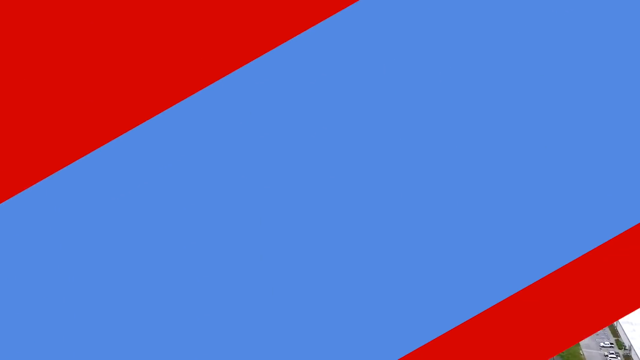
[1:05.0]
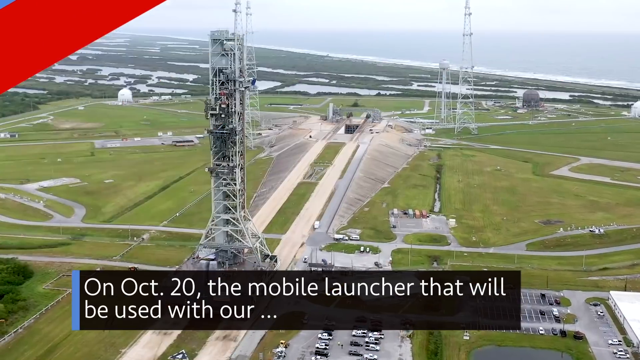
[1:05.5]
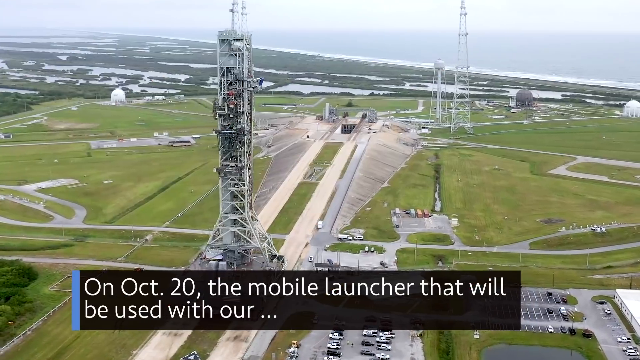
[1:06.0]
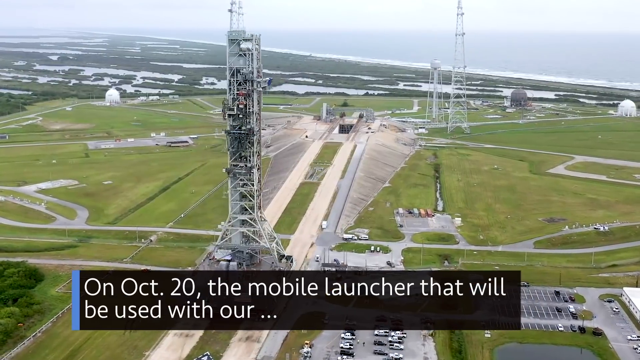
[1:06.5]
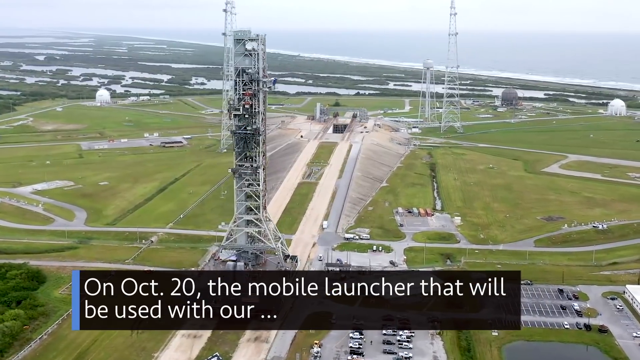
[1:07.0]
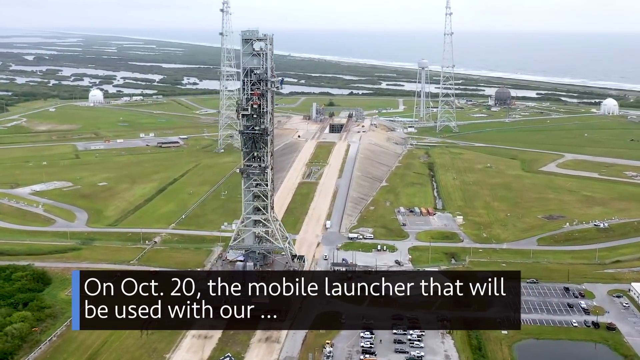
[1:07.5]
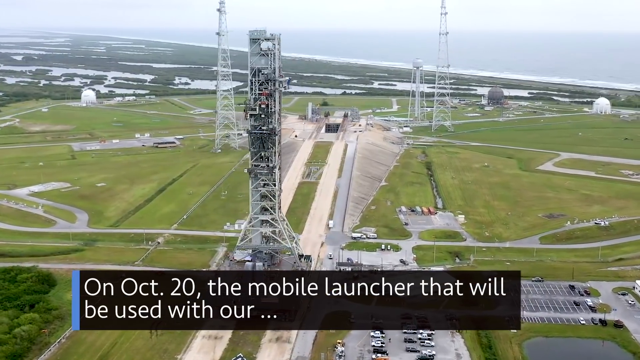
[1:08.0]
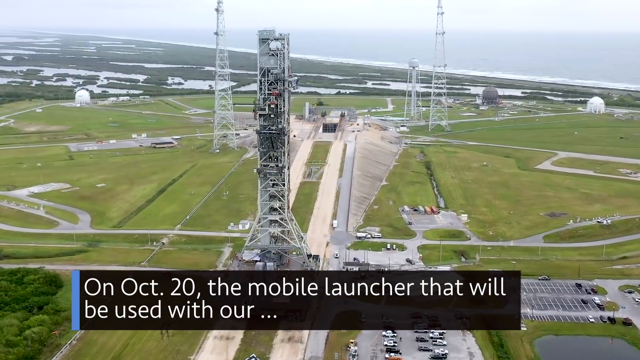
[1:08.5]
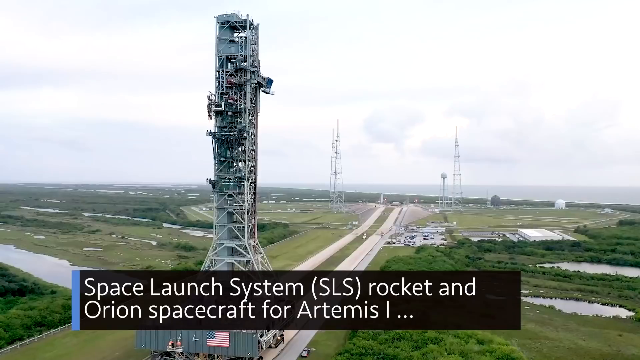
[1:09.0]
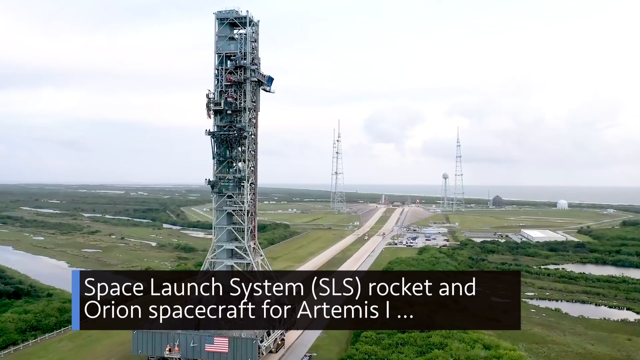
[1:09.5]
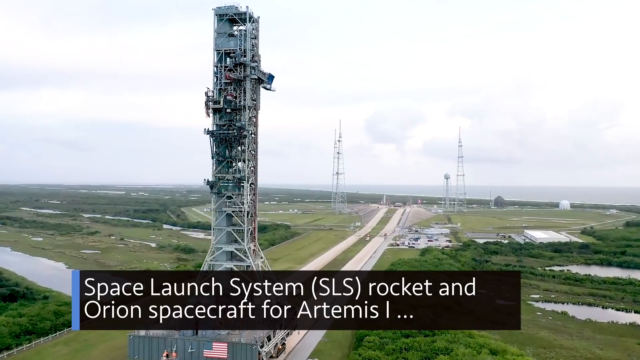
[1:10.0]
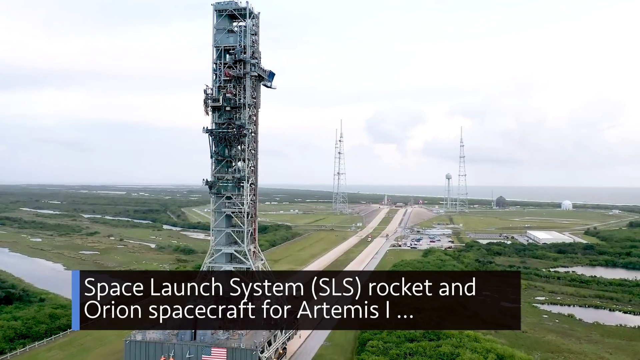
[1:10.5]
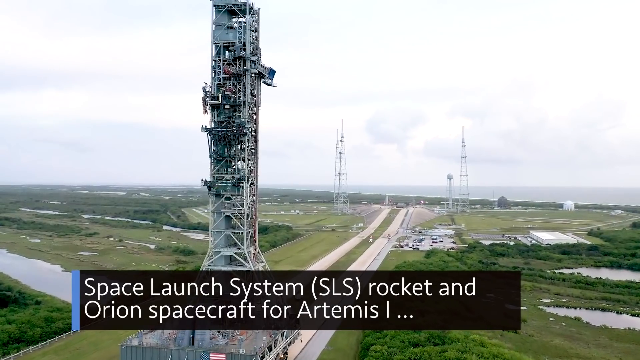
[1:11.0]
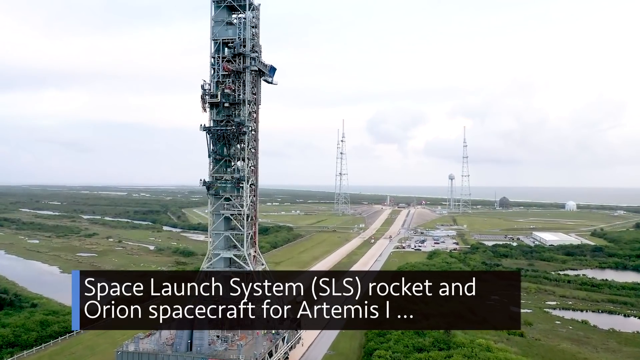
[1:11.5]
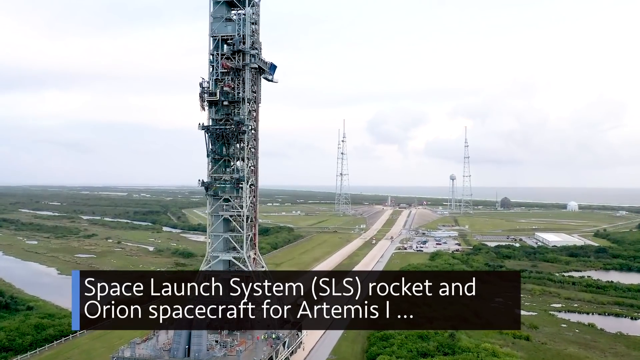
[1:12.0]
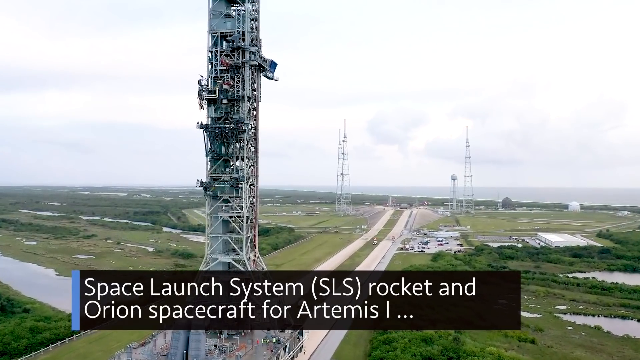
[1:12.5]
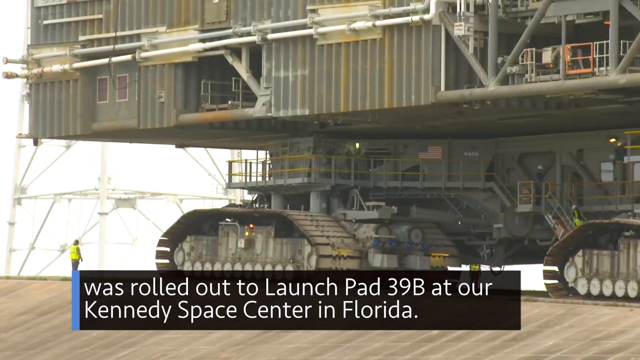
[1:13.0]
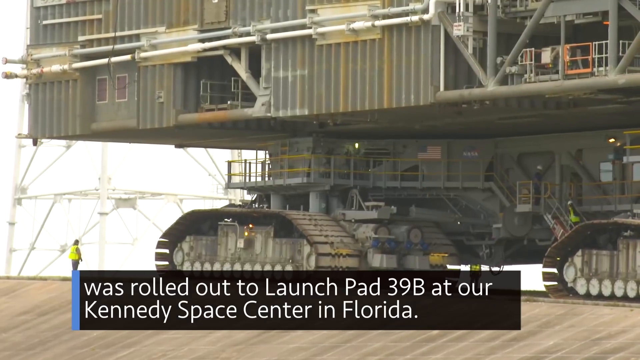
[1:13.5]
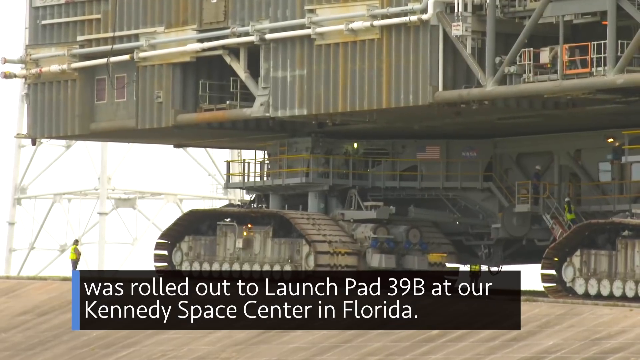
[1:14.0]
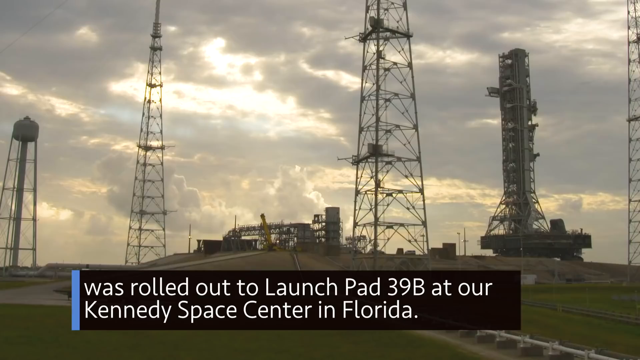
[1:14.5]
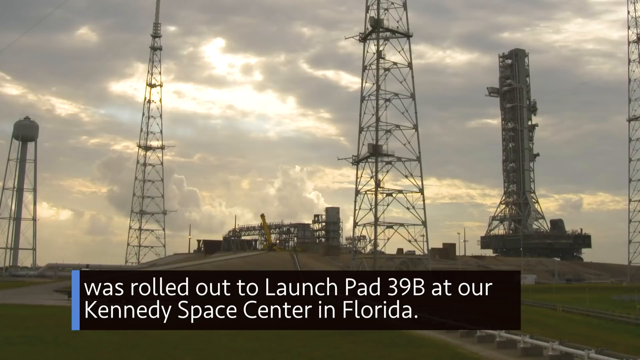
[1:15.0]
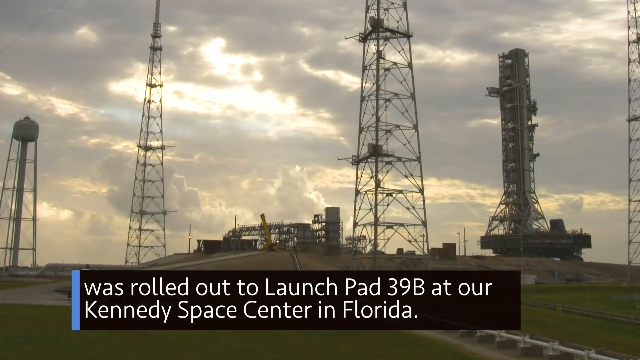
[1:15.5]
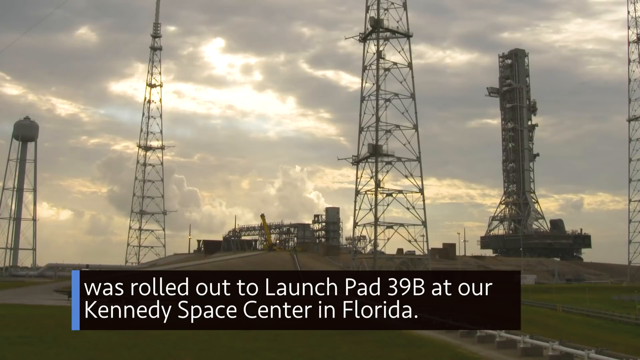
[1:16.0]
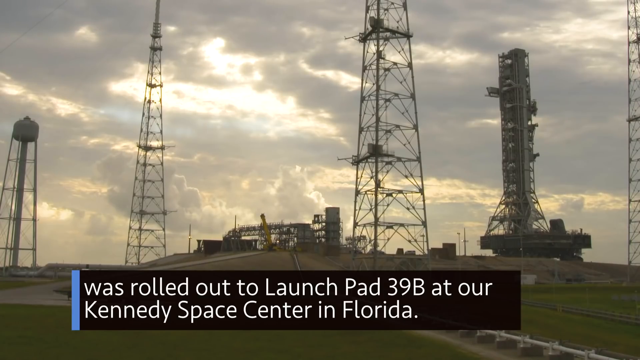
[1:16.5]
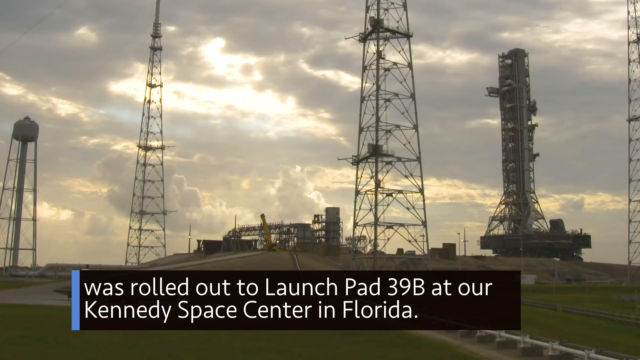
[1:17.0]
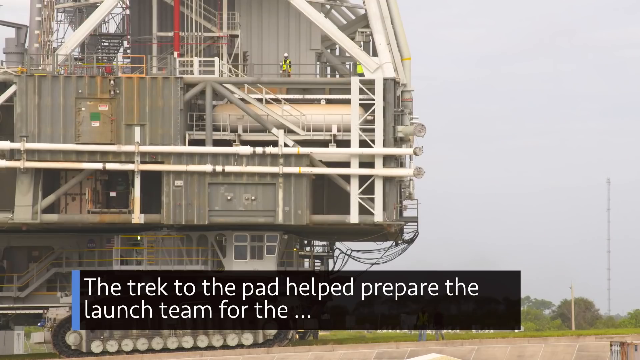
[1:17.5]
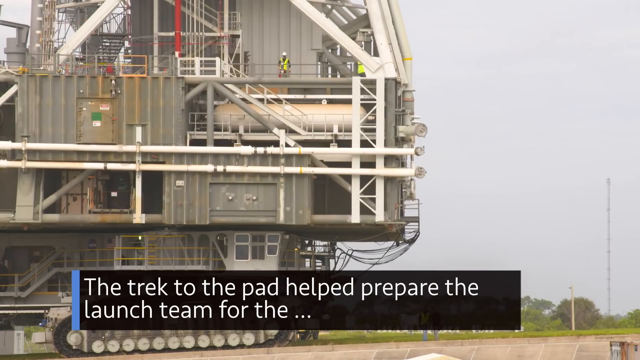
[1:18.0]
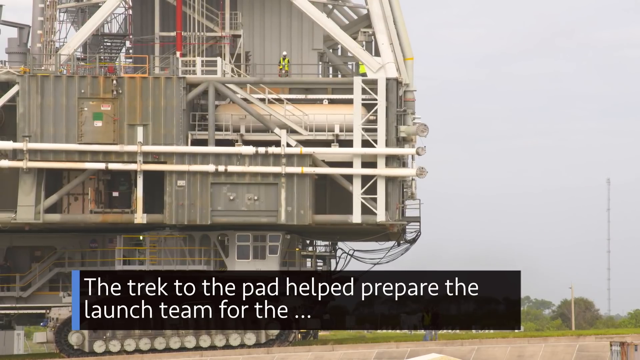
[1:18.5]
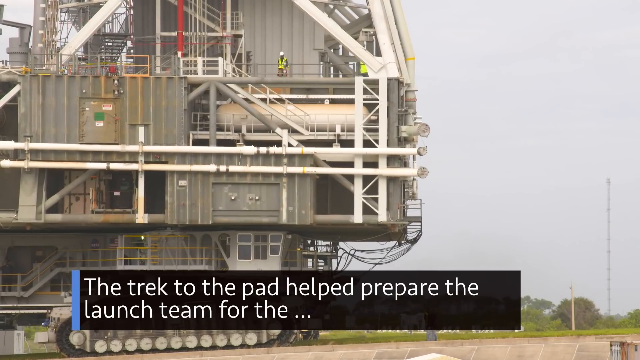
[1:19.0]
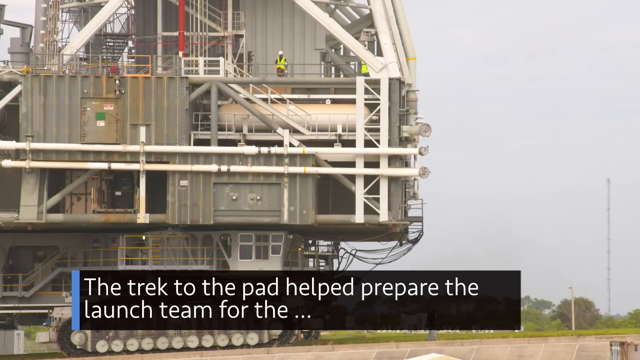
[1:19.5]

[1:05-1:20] The launch systems for the Artemis spaceship are shown at what looks like Kennedy Space Center: a vast amount of land with a couple of roads and several tall towers. The captions say these launch systems are in Florida and will be used to launch Artemis spacecraft into space to collect samples from an asteroid. A huge building is on what look like huge army wheels, so the building appears to be mobile. On top of this very large mobile building, a couple of men stand wearing bright yellow neon vests and what look like hard construction hats; no other people are visible. The mobile launcher is a very large piece of equipment.